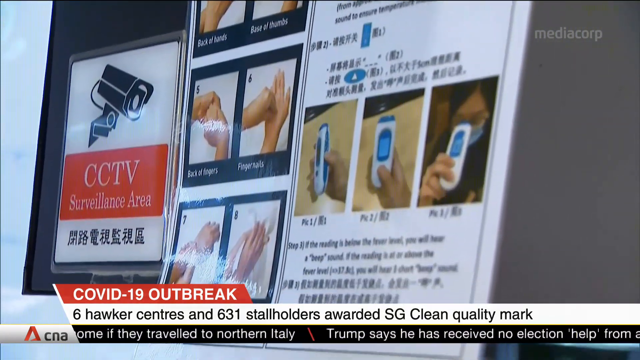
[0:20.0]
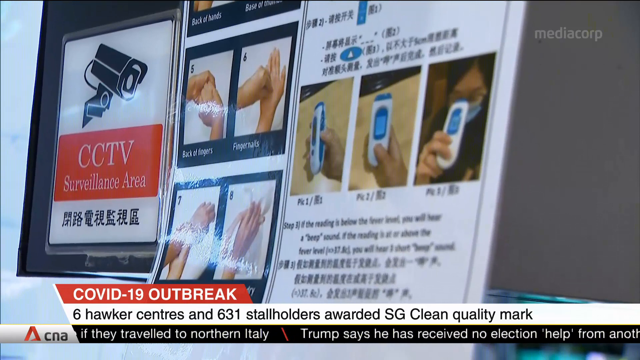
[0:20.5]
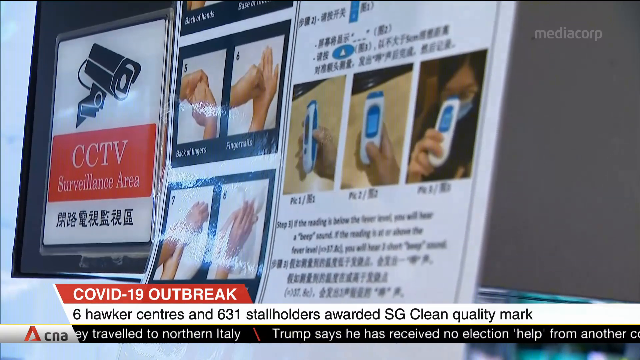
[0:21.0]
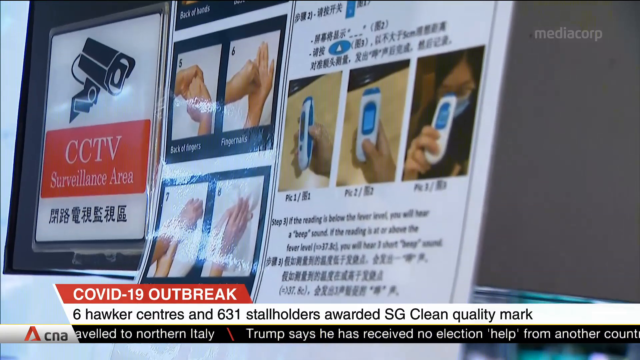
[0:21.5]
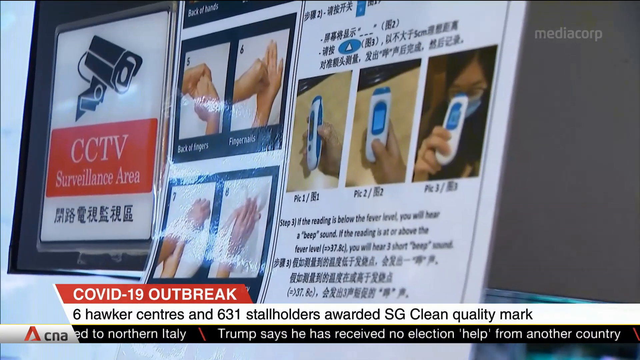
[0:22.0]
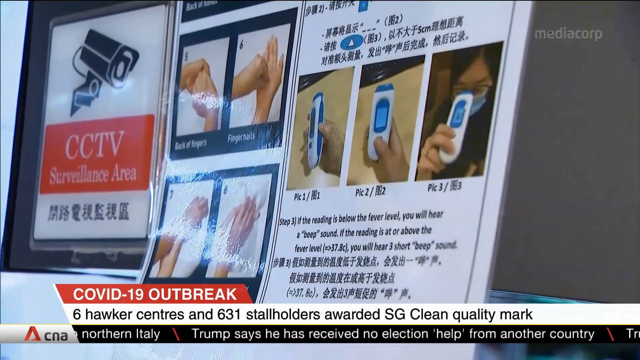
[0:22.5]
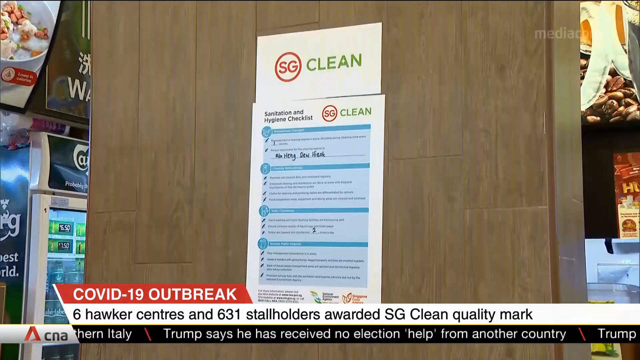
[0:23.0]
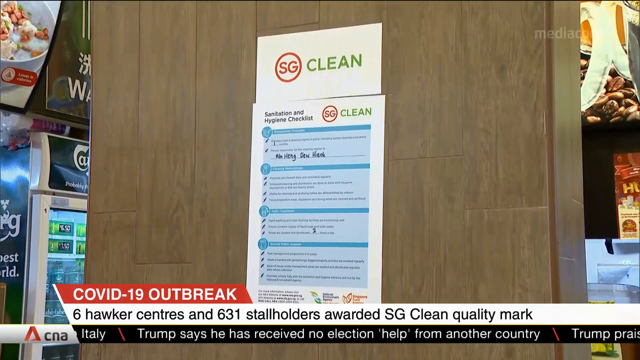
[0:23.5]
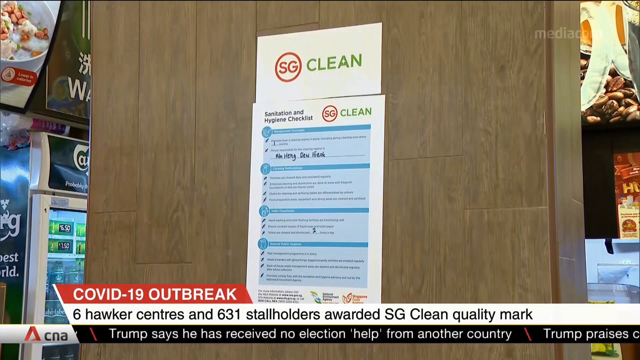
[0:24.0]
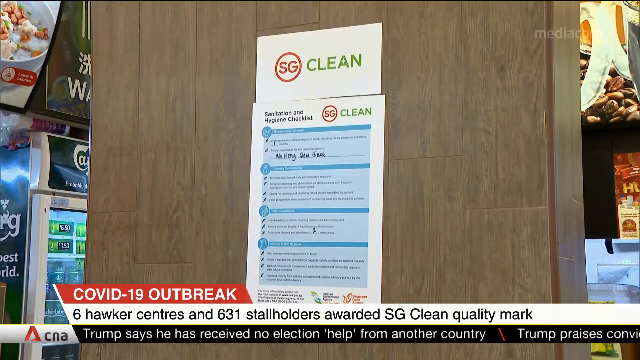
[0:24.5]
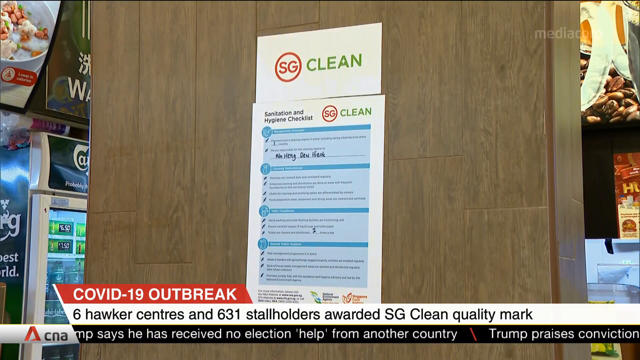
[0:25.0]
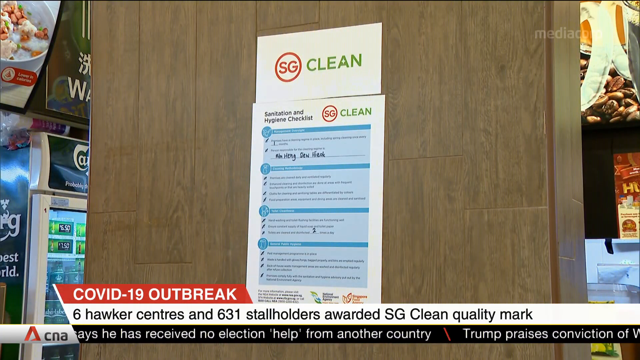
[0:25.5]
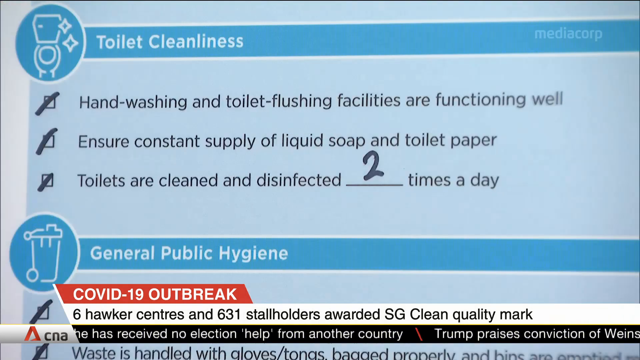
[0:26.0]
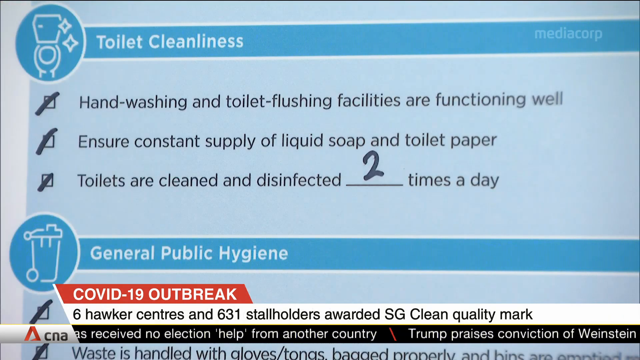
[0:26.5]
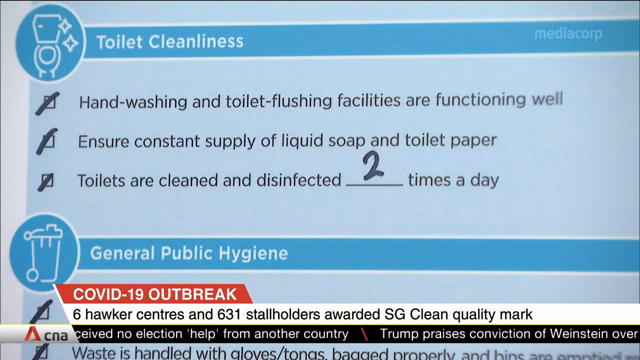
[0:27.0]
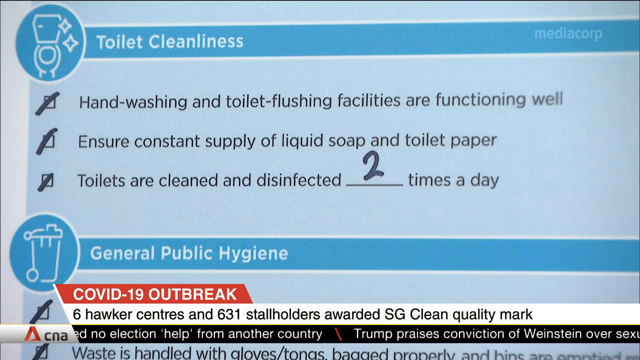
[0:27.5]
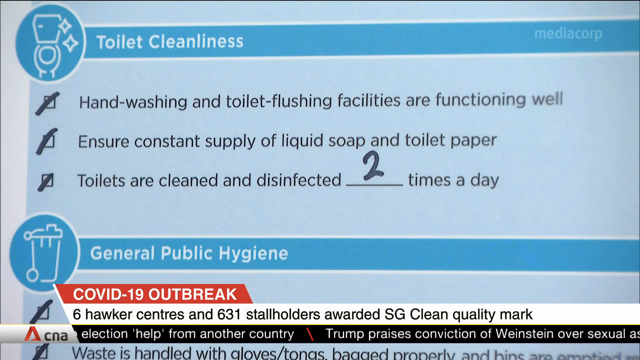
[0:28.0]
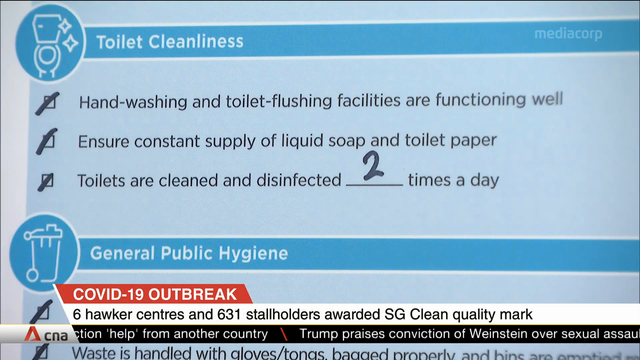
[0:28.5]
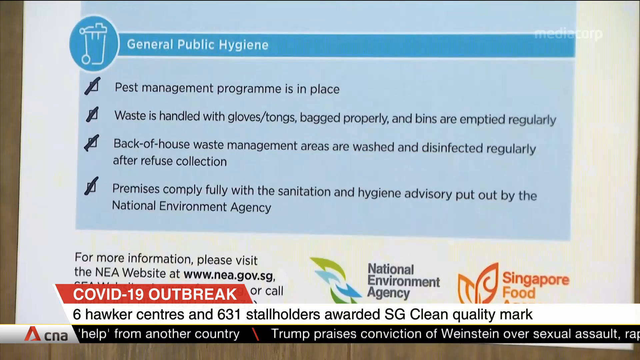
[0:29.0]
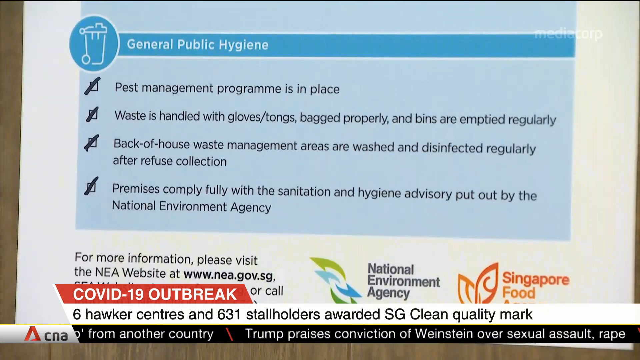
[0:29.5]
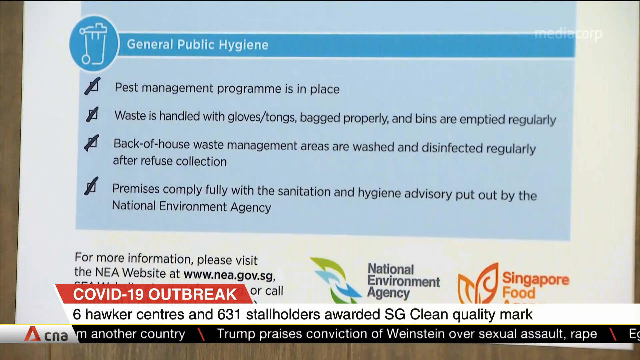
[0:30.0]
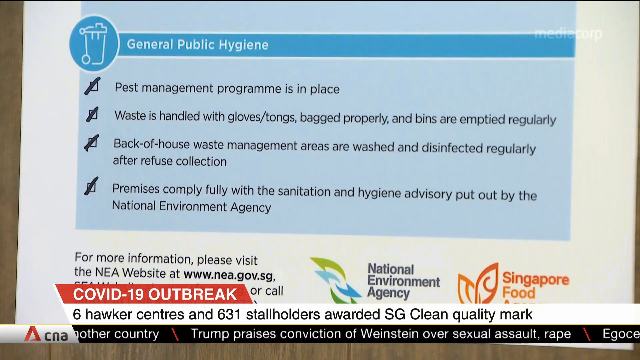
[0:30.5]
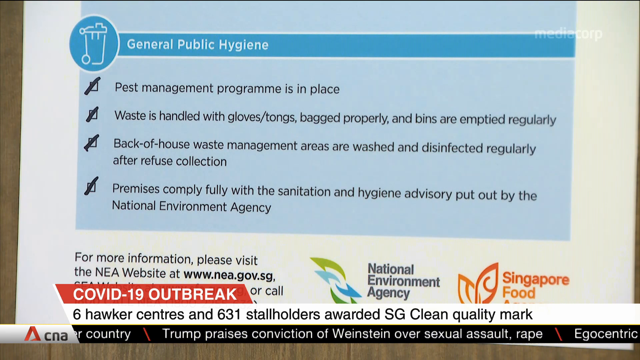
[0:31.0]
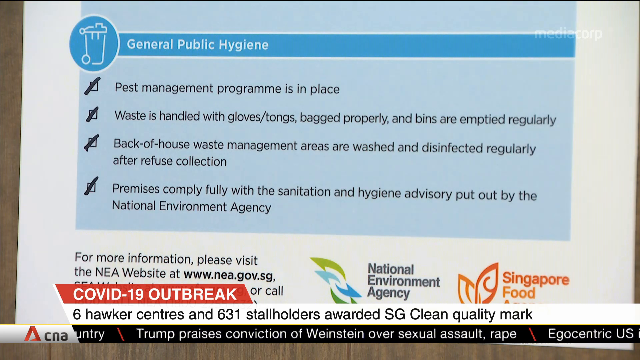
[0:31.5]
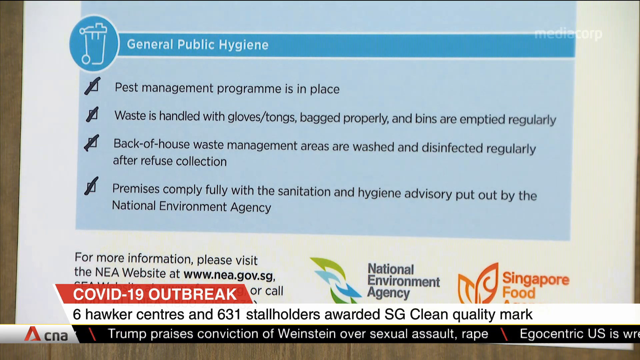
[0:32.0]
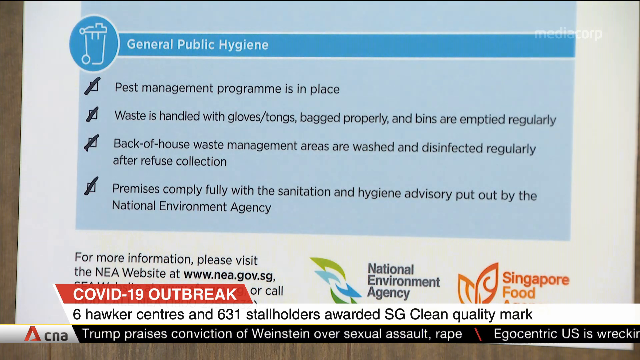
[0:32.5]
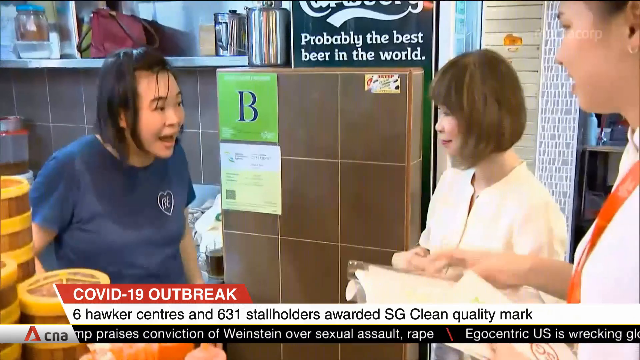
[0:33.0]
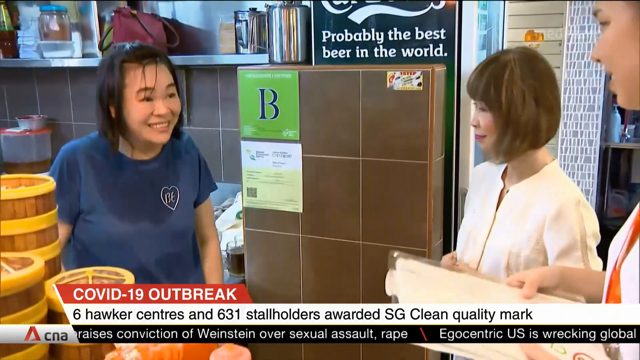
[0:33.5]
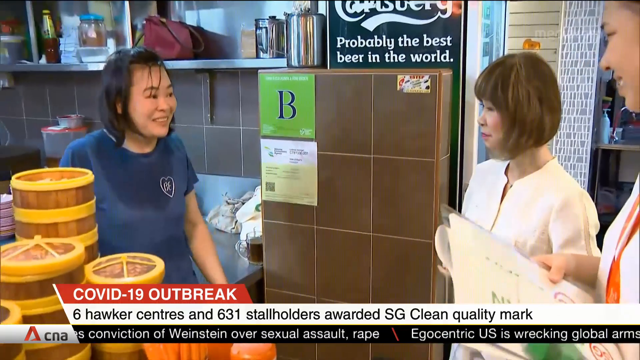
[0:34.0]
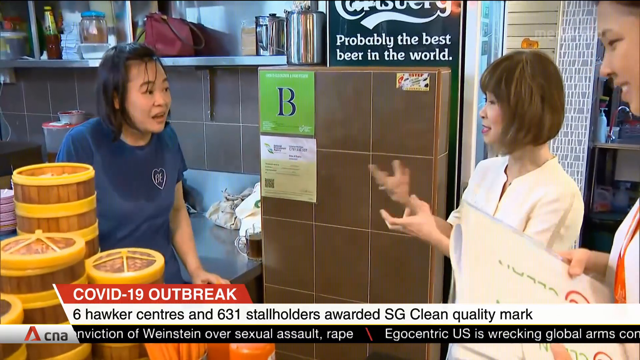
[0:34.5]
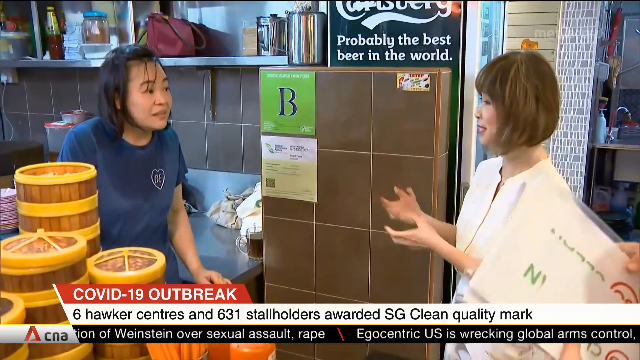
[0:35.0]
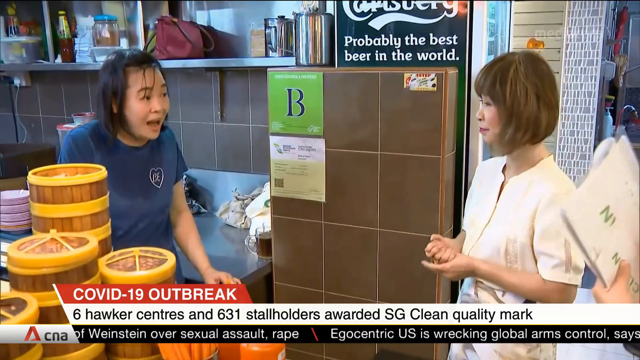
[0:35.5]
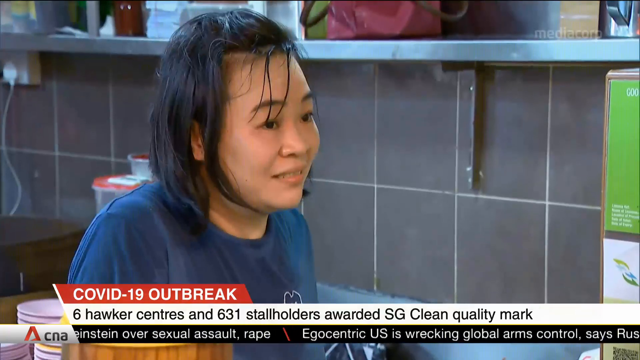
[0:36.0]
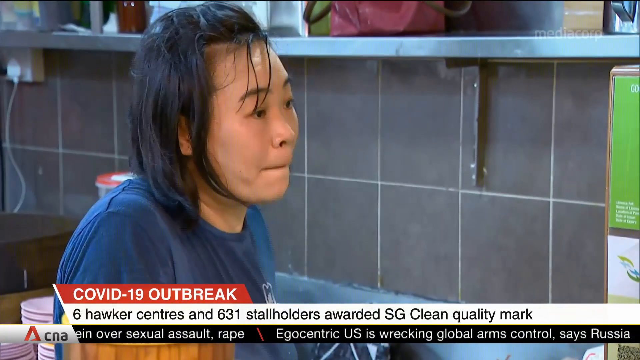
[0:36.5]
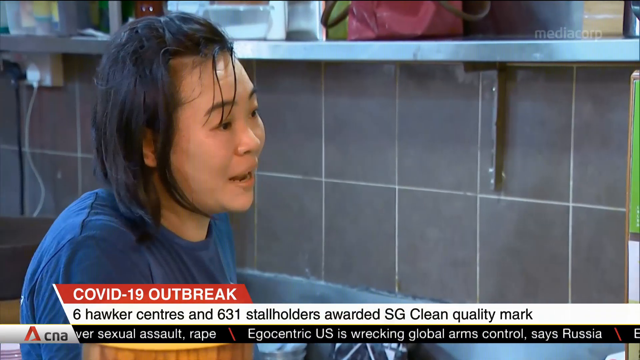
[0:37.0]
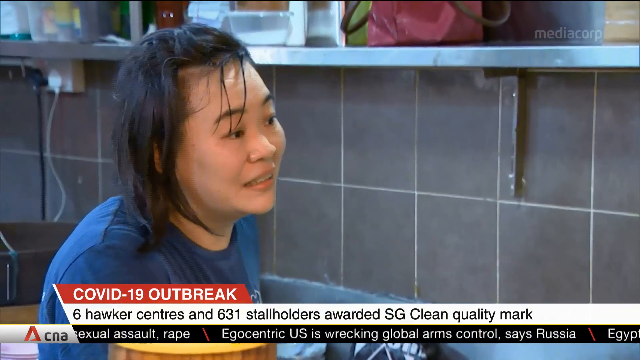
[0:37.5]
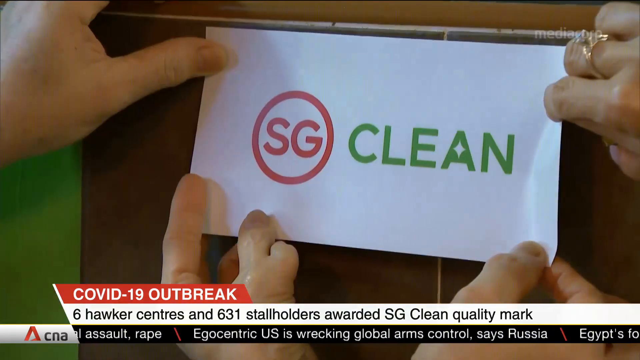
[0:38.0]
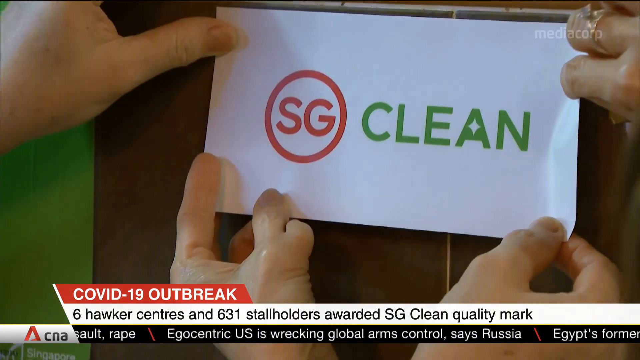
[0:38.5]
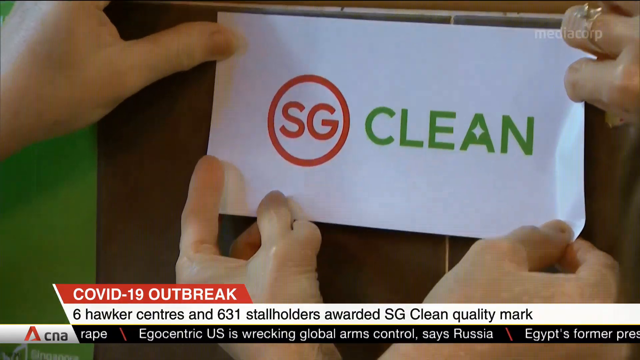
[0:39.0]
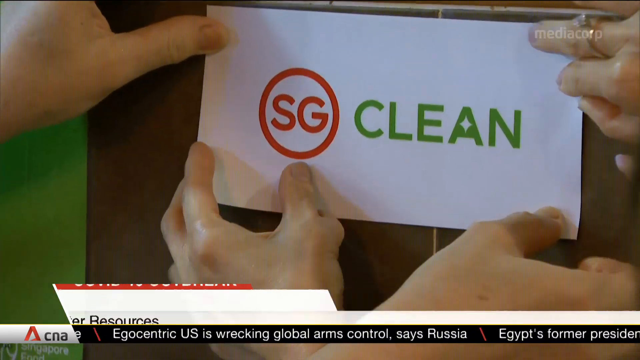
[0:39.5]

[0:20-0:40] What look like three laminated papers are on glass or some sort of case. The first shows an image of a camera and says "CCTV surveillance area", followed by some writing in what looks like Chinese. The second might be instructions on how to wash hands properly, and the third appears to have Chinese writing and may be instructions on taking a temperature with a device held up to the forehead. A banner across the bottom says "COVID-19 outbreak", marking it as a news report. Another sign on some sort of brown wall says "SG clean". A close-up follows of text about toilet cleanliness and general public hygiene, showing that the toilet was cleaned two times a day. Then some people who look Asian are talking; a woman in a navy shirt nods and smiles at another woman, who may be being interviewed.